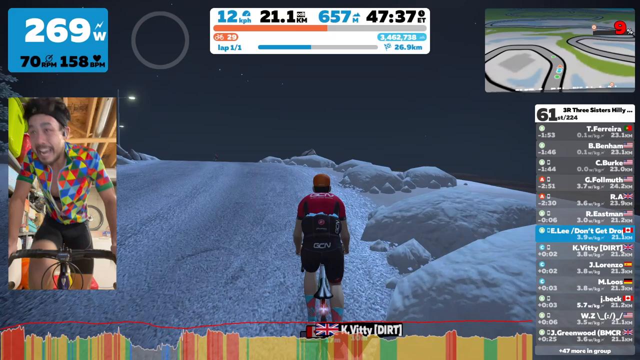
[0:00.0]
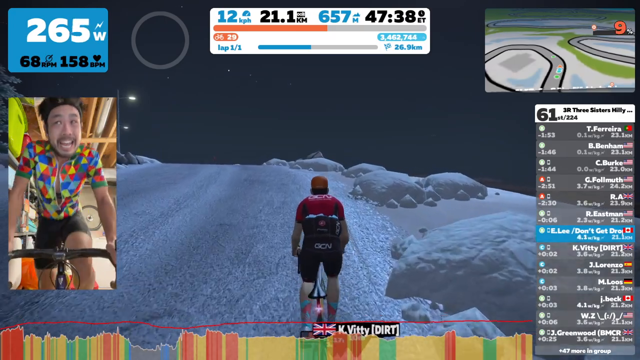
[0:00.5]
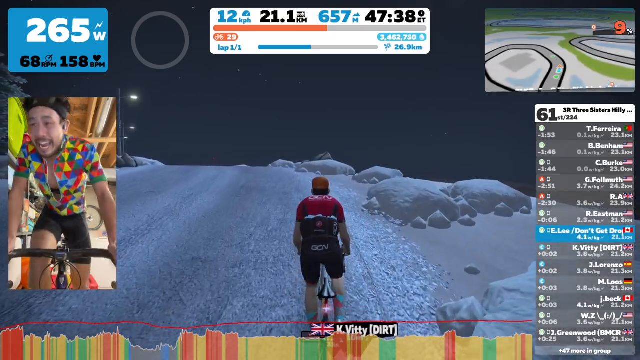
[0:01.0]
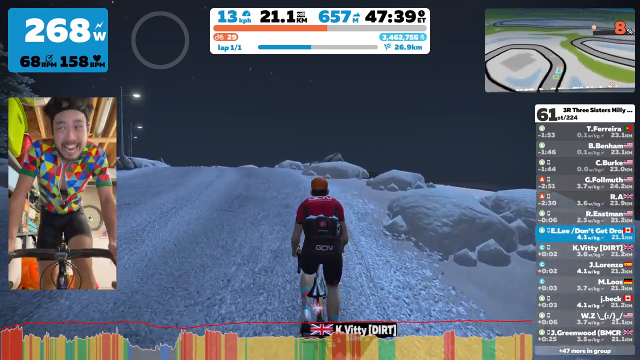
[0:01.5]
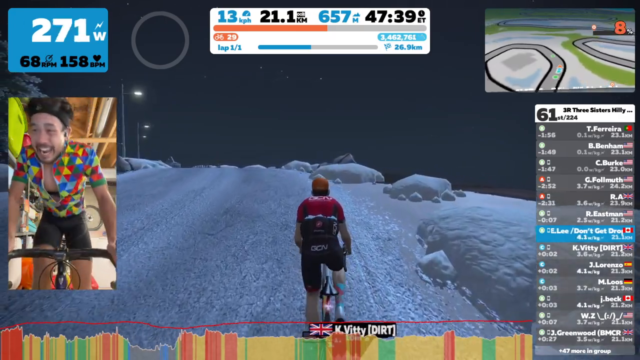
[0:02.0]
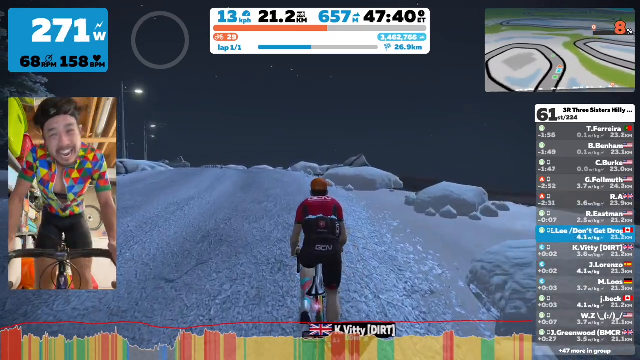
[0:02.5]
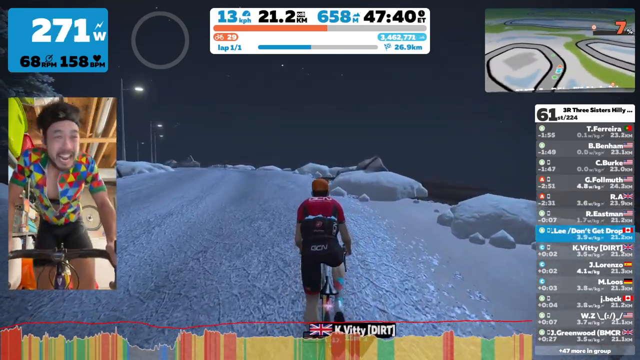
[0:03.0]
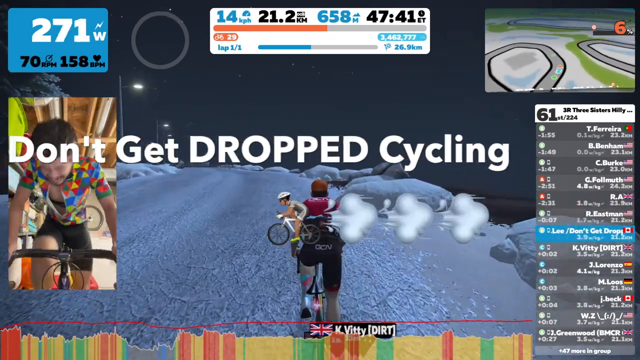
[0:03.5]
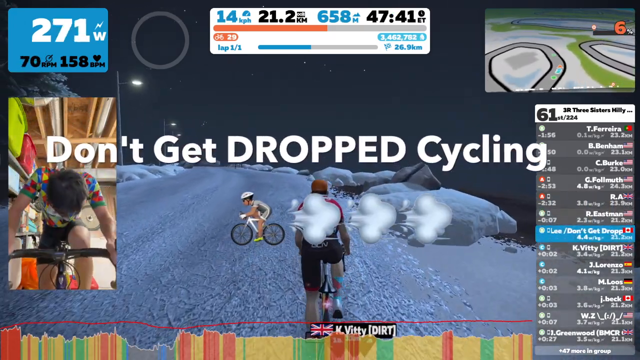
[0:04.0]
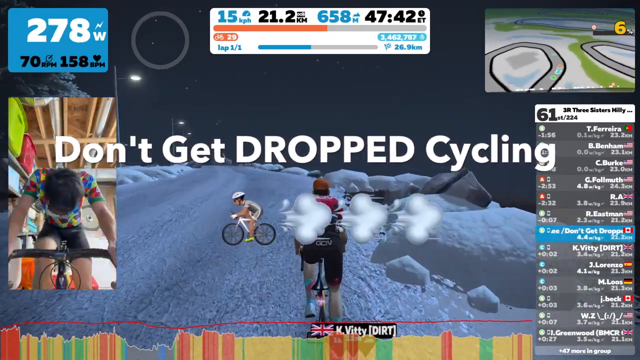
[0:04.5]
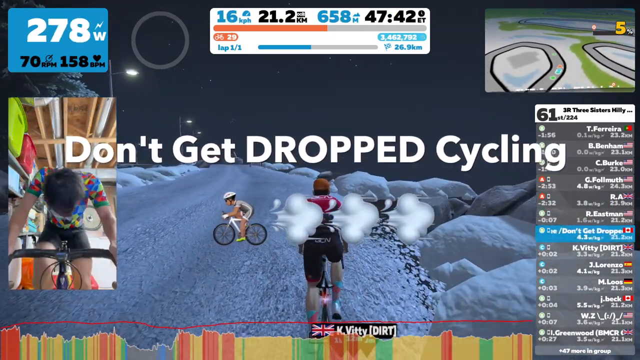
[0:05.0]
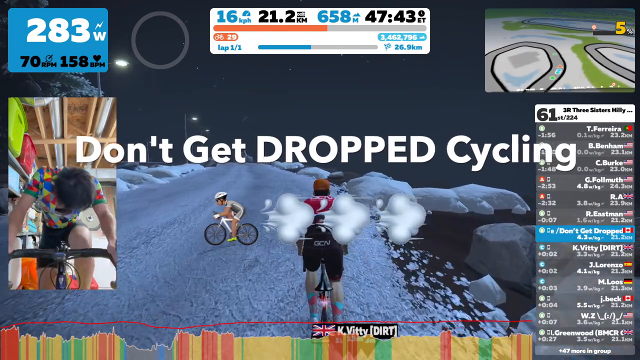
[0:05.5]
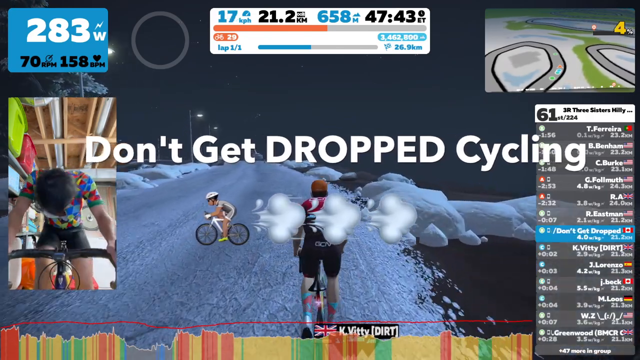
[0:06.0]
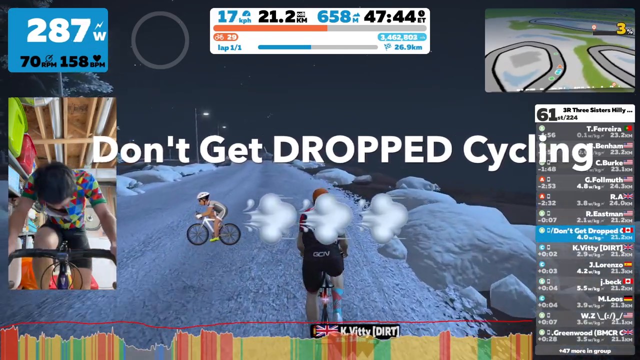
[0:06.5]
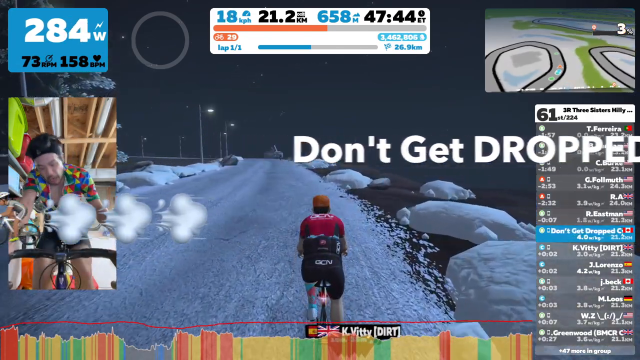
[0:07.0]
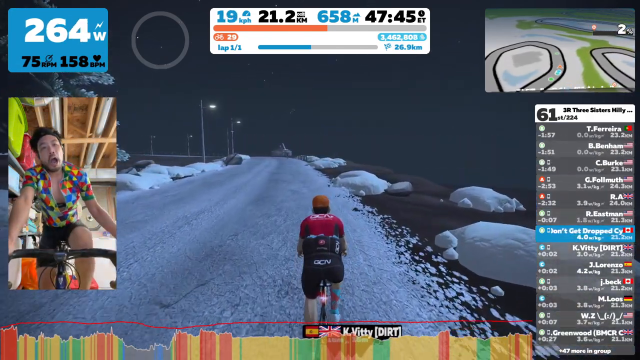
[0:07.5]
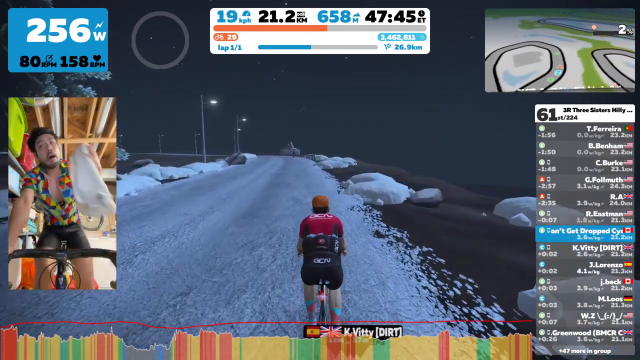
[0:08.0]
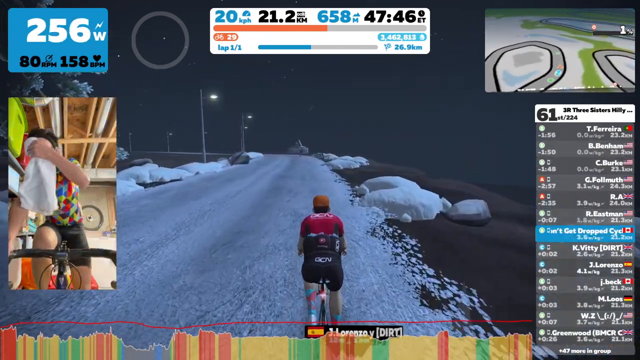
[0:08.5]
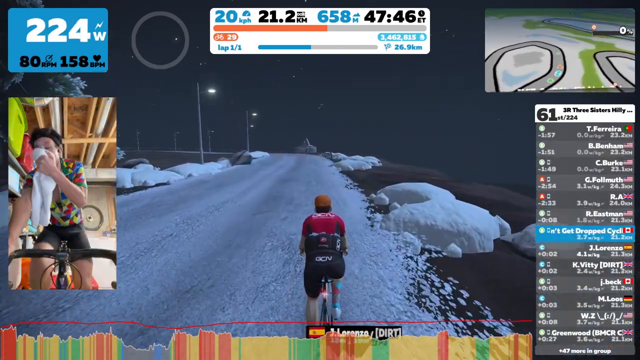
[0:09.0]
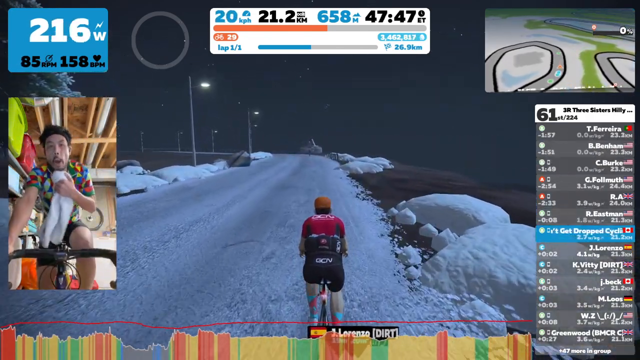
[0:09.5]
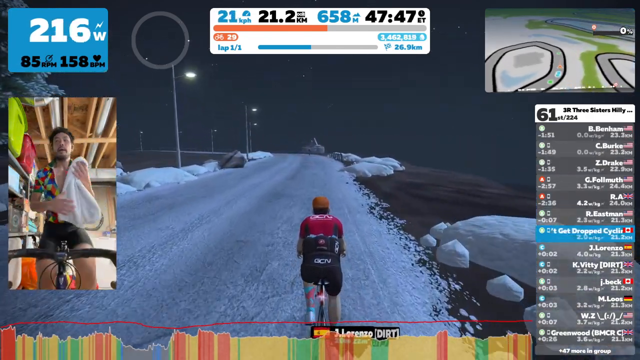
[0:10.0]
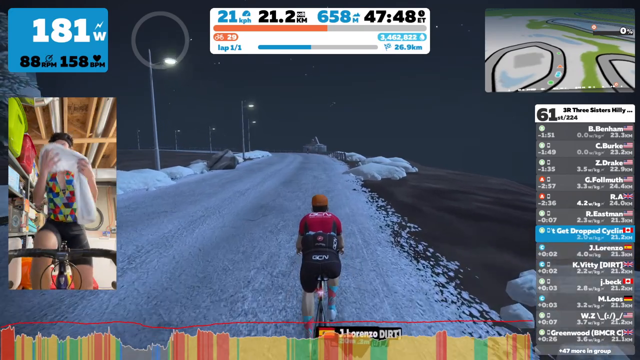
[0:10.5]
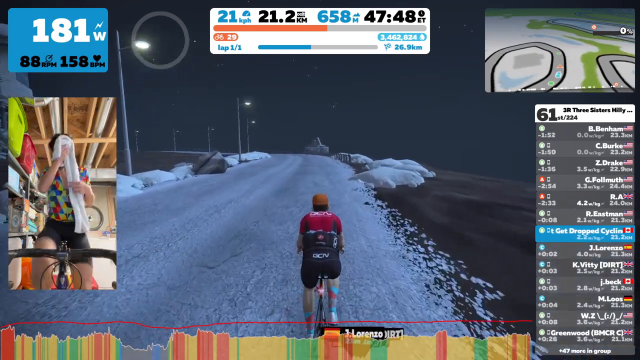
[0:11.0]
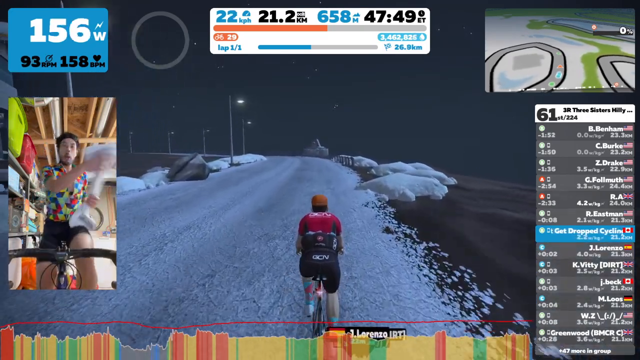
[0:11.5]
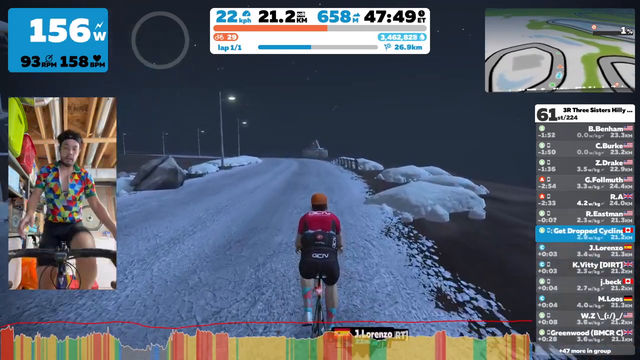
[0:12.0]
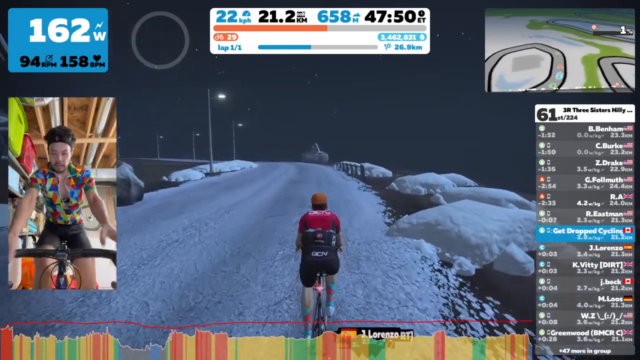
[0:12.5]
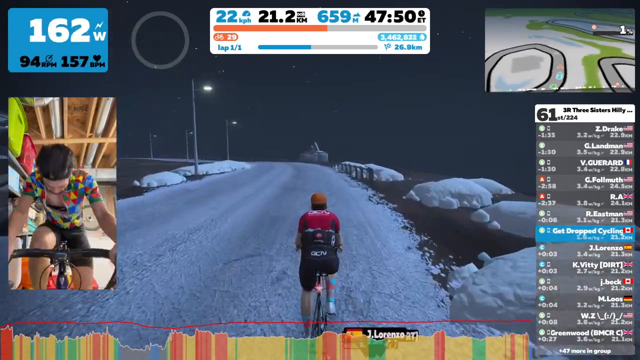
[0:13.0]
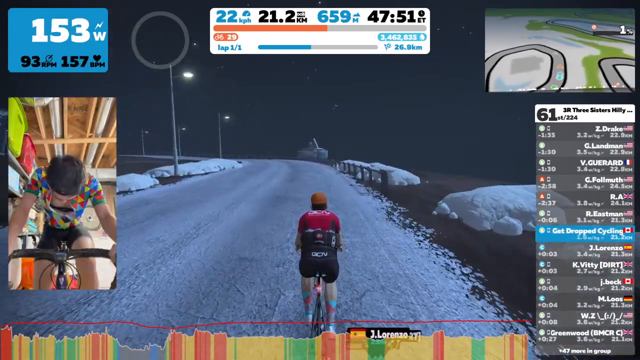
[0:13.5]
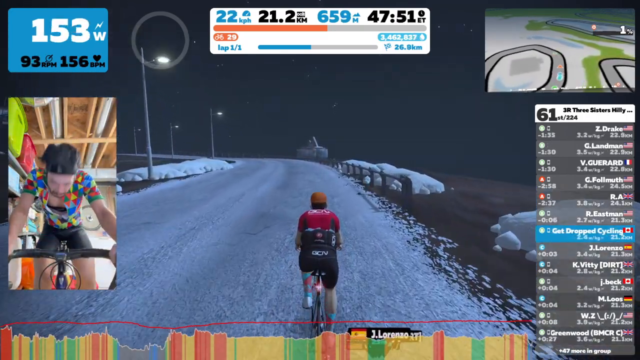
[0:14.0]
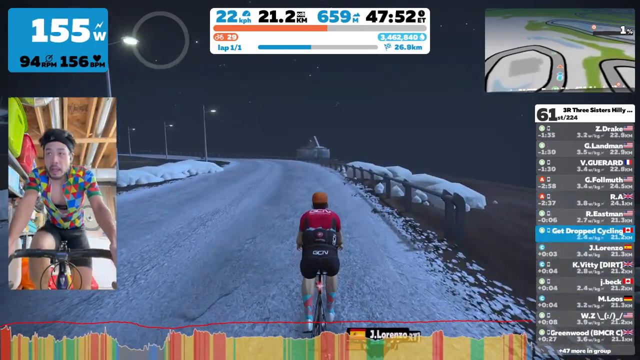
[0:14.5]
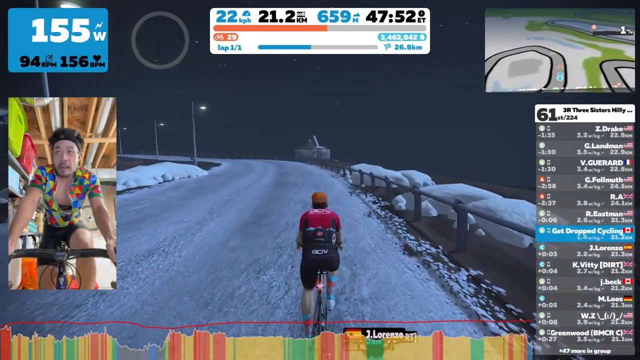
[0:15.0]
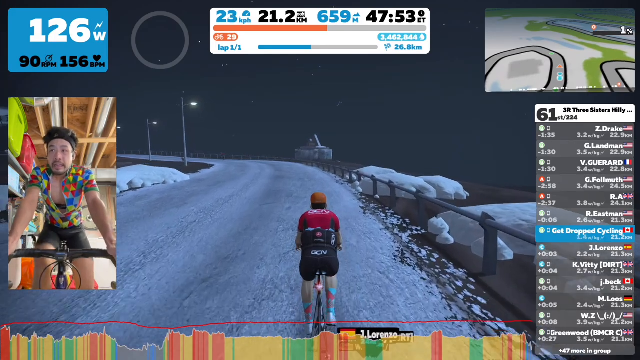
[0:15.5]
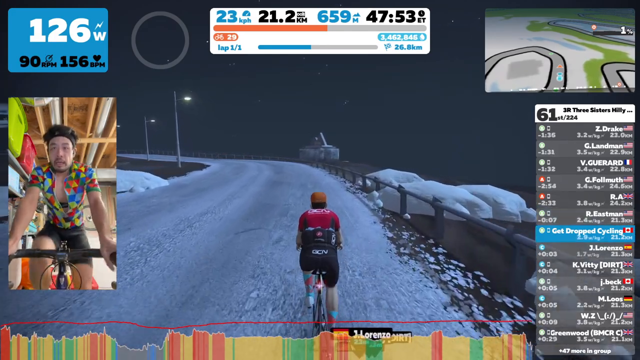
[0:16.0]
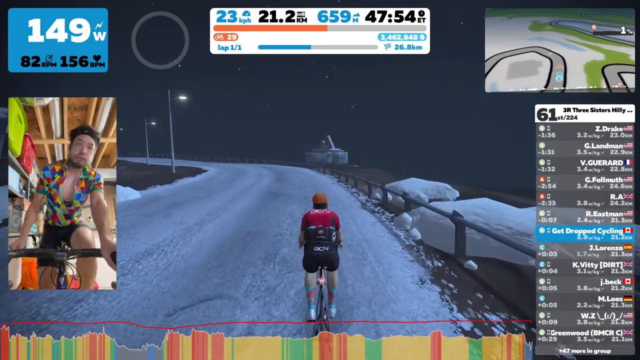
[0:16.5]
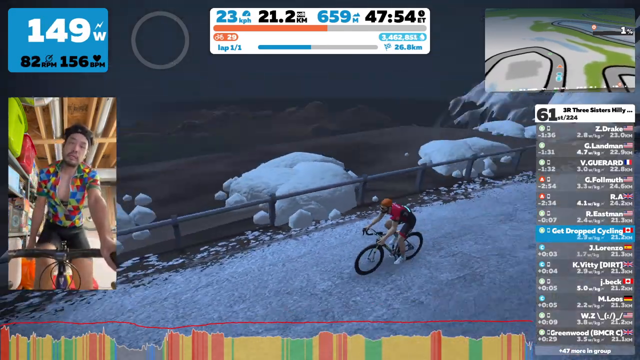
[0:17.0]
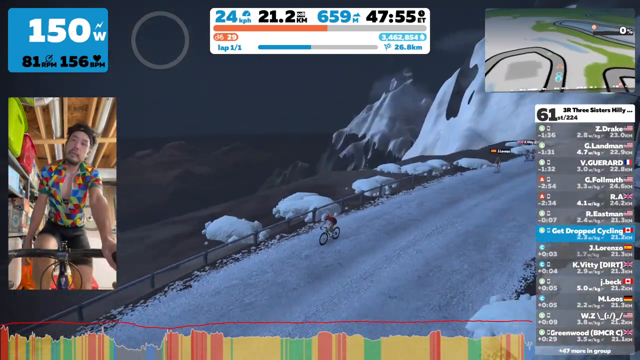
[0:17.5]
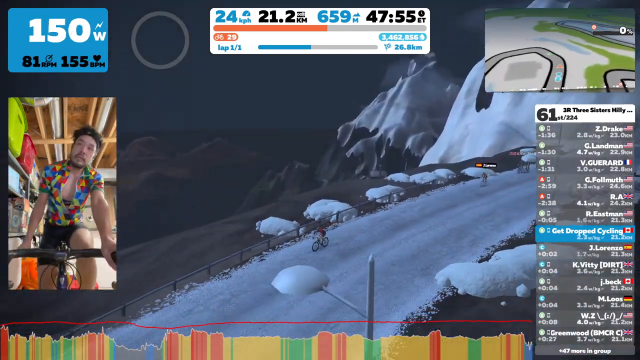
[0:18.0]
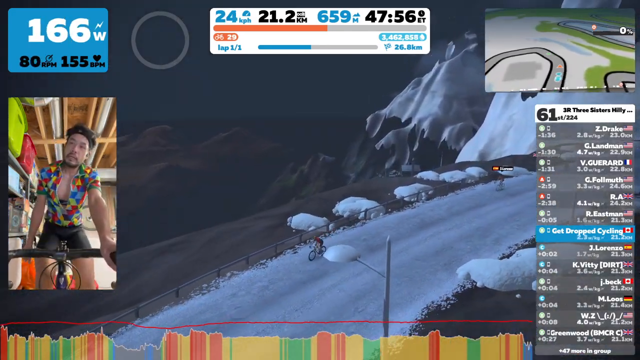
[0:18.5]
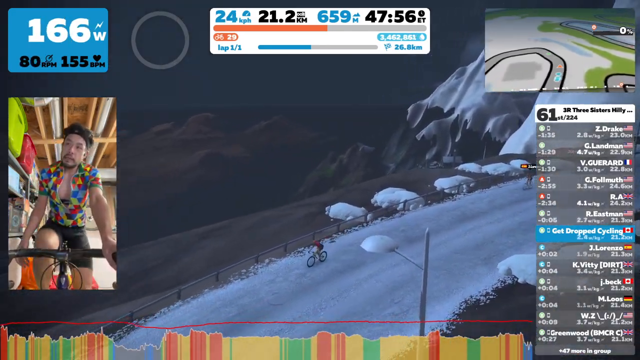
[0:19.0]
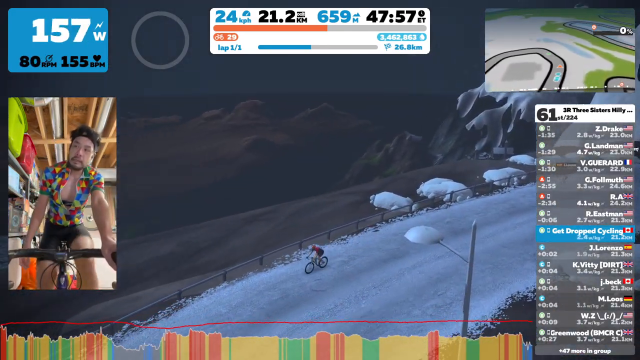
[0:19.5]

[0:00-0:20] The video shows a cycling video game in which the player controls the game by pedaling an actual bicycle. On the left side of the screen, a man is shown from the front with his hands on handlebars, pedaling. The game screen takes up most of the video, with the game character in the center, seen from behind, in a very snowy environment; the character seems to be either on the edge of a mountain or simply going down a road. Statistics in very small text appear on the right side, and a map is in the top right corner. White text reads "don't get dropped cycling" with a bicycle emoji, followed by three wind gust emojis to its right. The man keeps pedaling; he appears to be wearing a rainbow Hawaiian shirt. He grabs a towel with his left hand and wipes his face, then wipes his face with the towel in his right hand. He throws the white towel and puts his hands back on the handlebars. He appears to be middle-aged and possibly Asian. The bicyclist continues to pedal and is then shown from an aerial view from an outside angle.